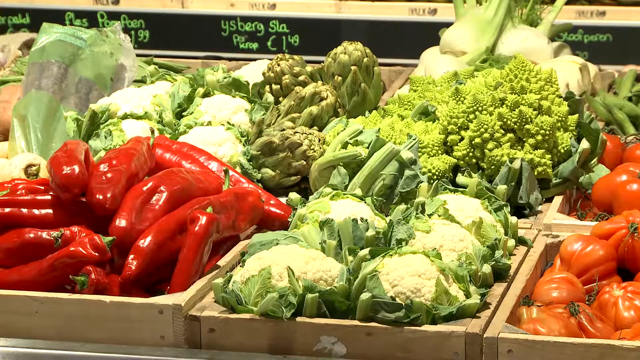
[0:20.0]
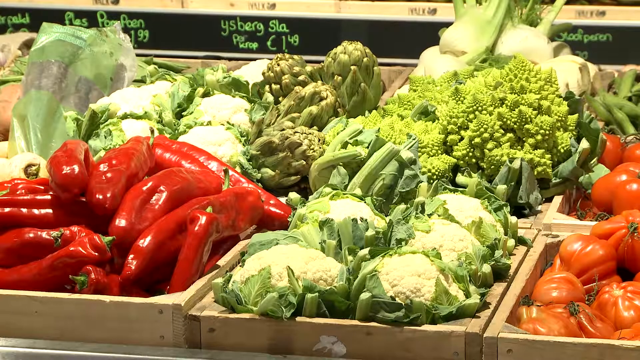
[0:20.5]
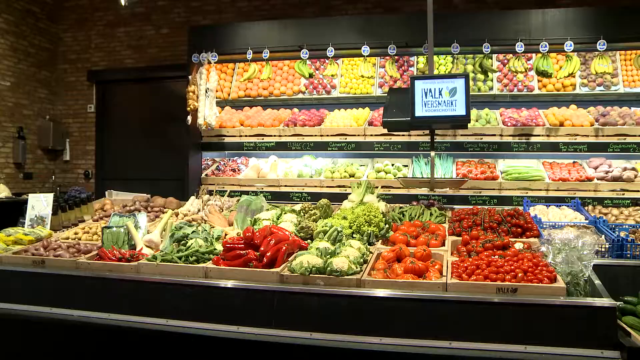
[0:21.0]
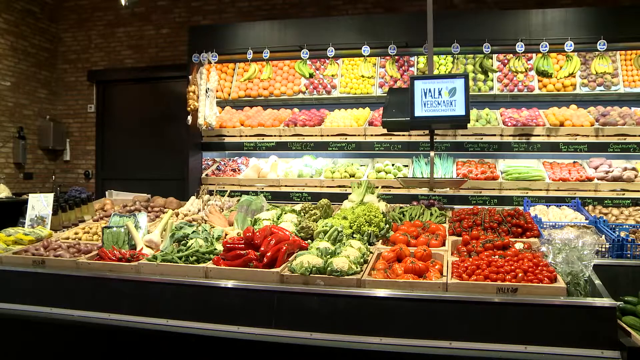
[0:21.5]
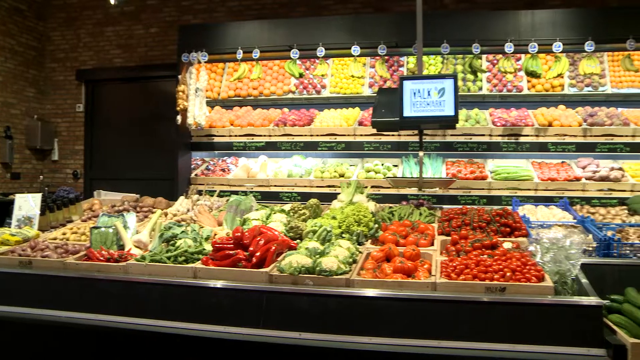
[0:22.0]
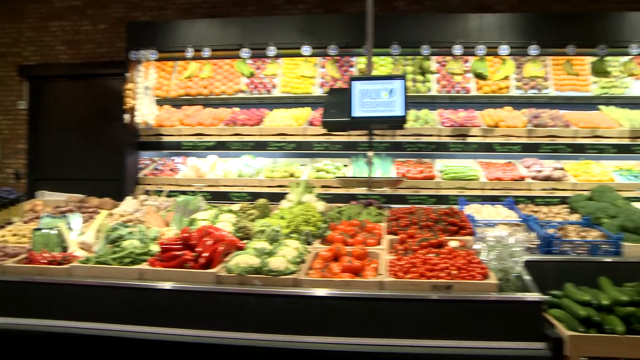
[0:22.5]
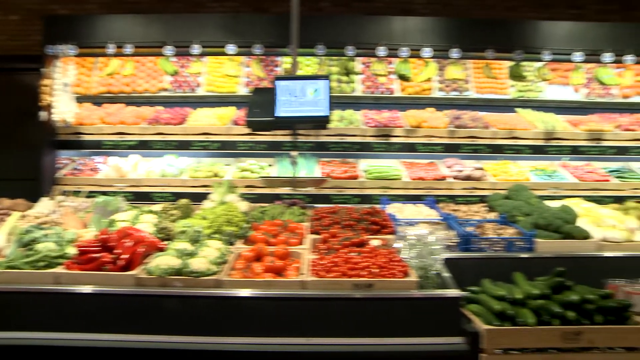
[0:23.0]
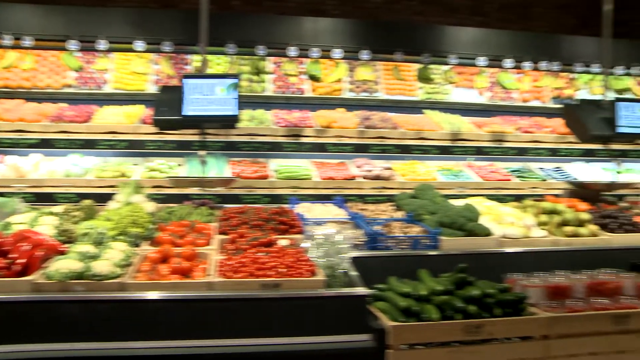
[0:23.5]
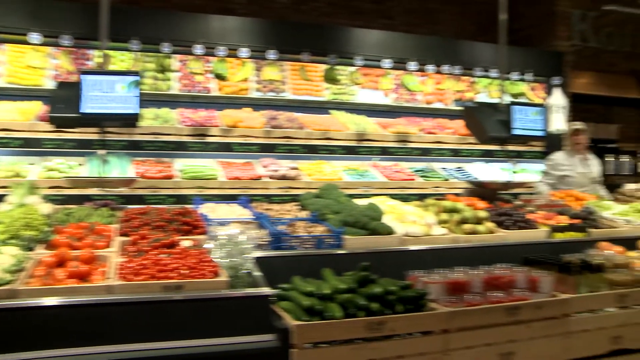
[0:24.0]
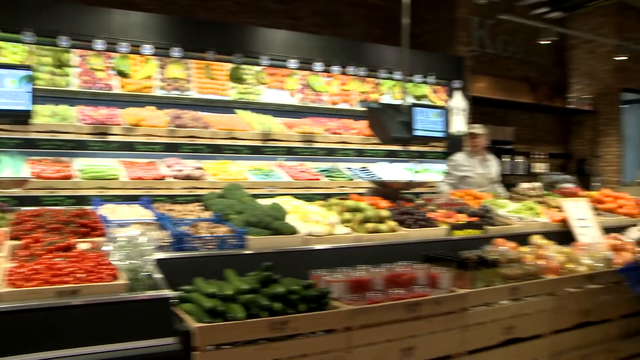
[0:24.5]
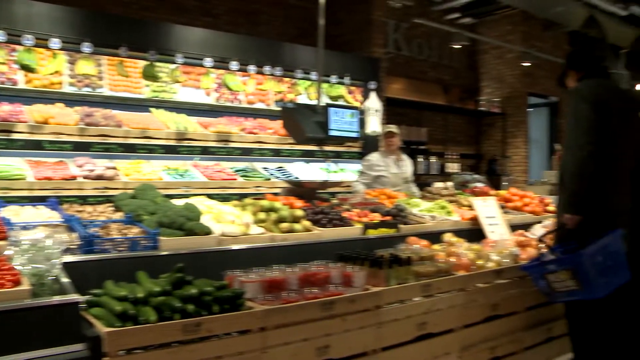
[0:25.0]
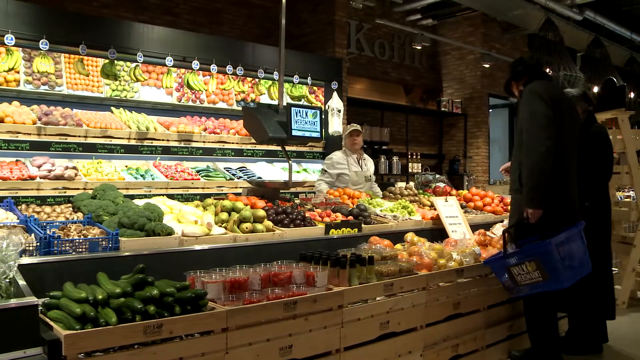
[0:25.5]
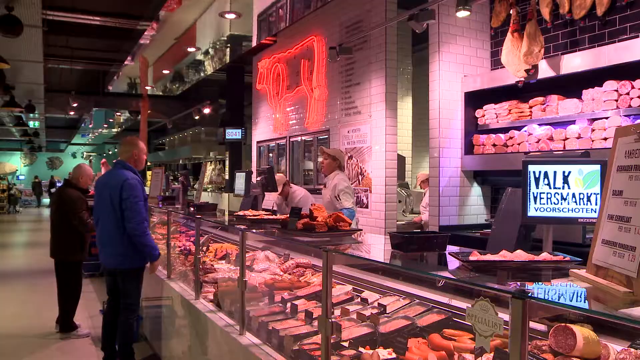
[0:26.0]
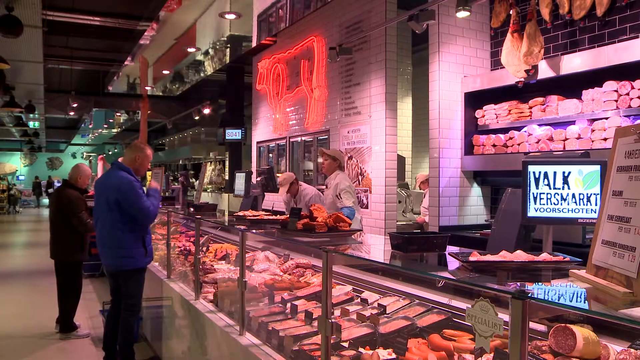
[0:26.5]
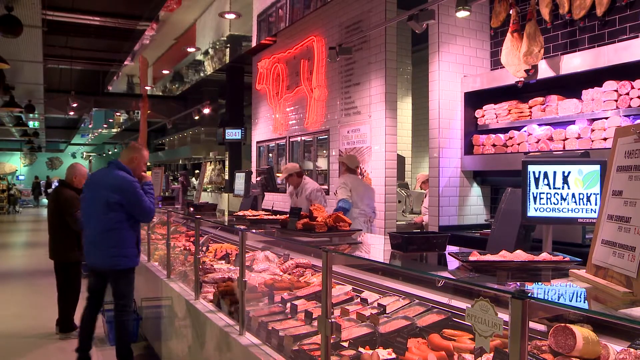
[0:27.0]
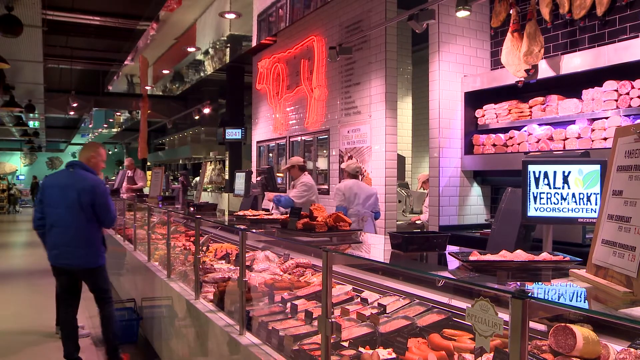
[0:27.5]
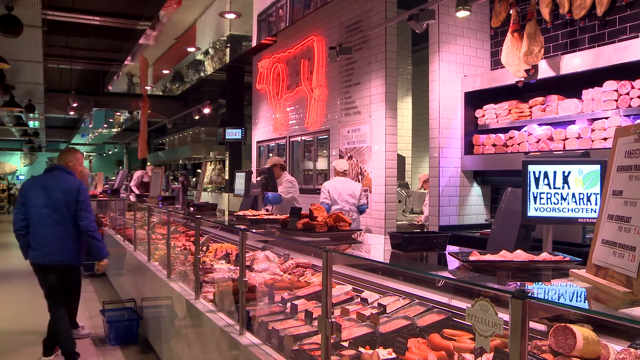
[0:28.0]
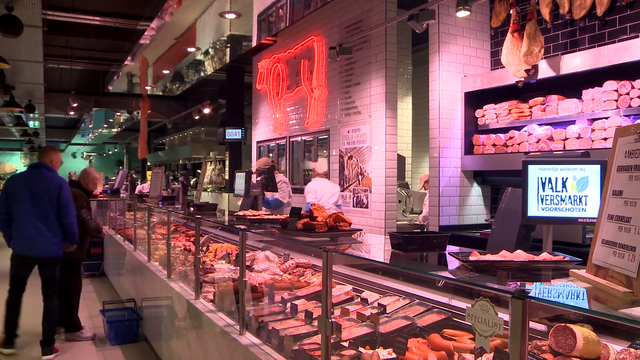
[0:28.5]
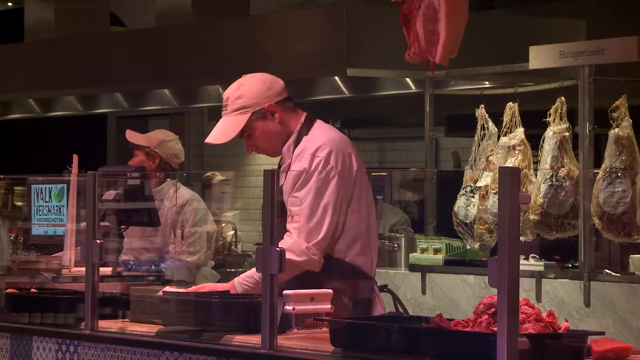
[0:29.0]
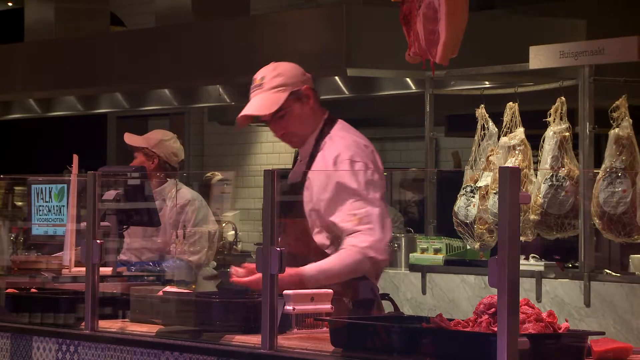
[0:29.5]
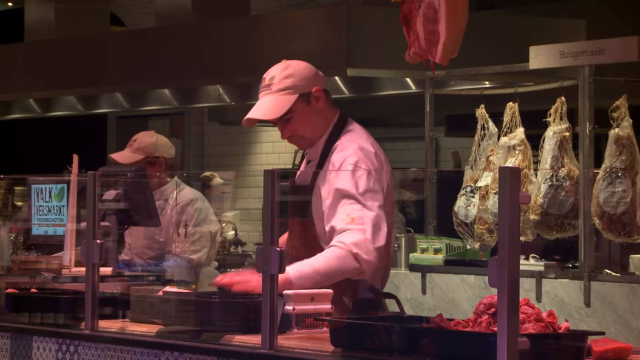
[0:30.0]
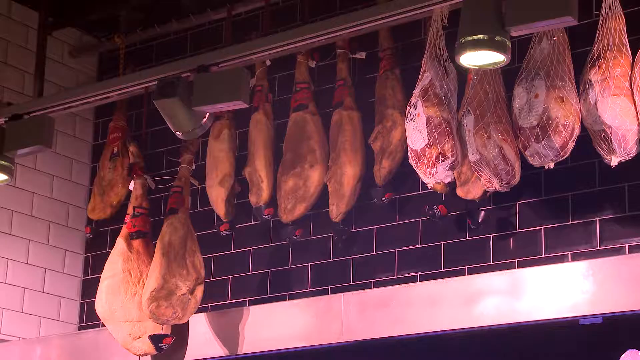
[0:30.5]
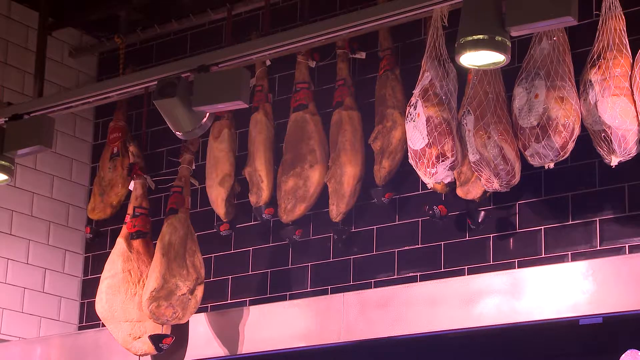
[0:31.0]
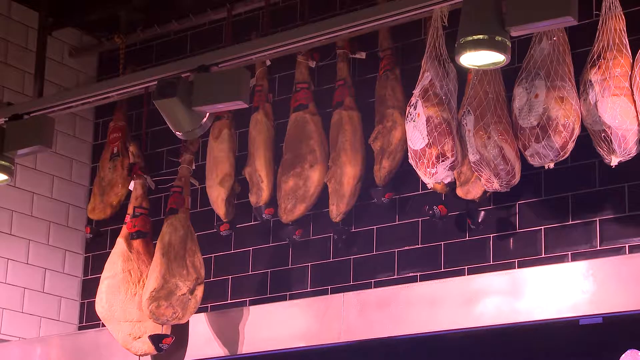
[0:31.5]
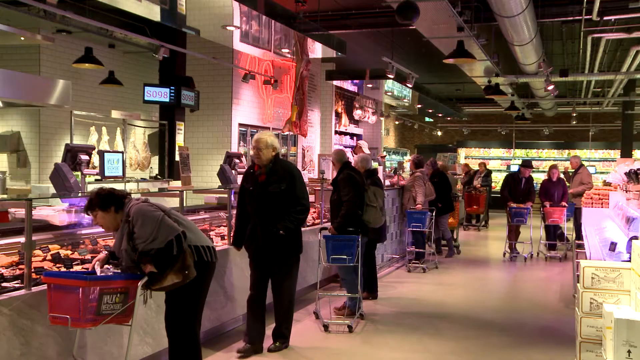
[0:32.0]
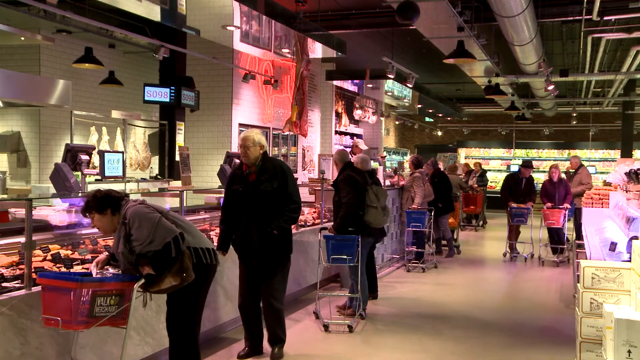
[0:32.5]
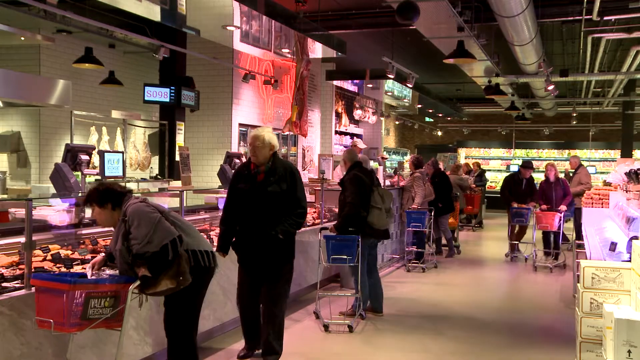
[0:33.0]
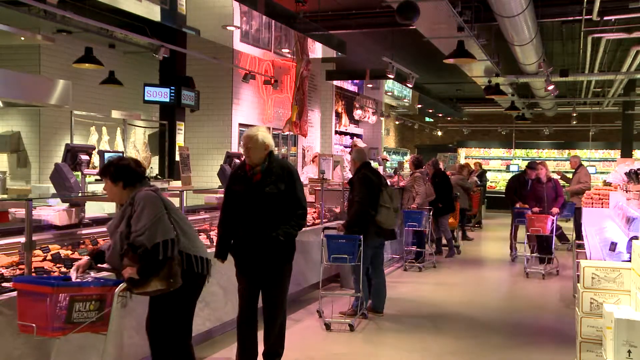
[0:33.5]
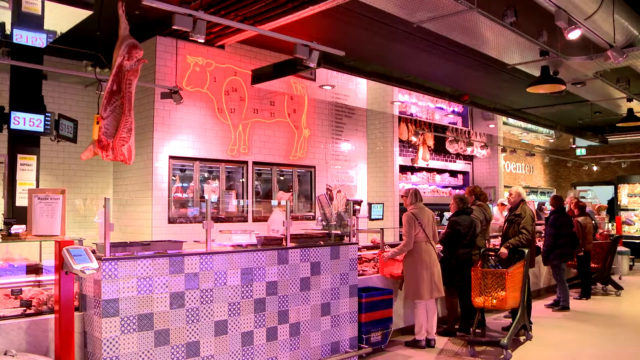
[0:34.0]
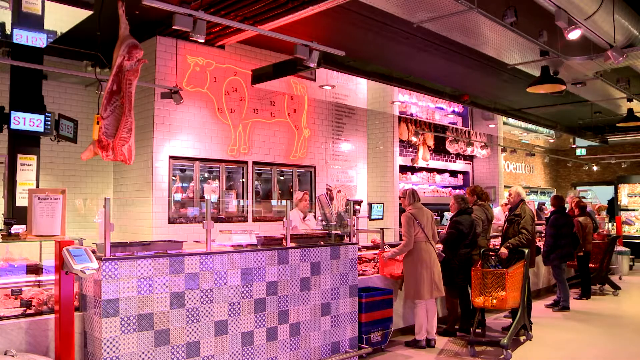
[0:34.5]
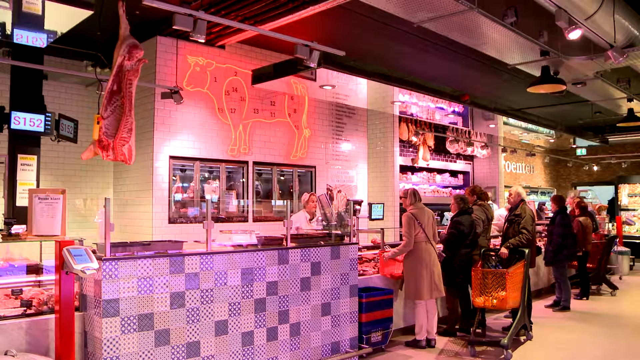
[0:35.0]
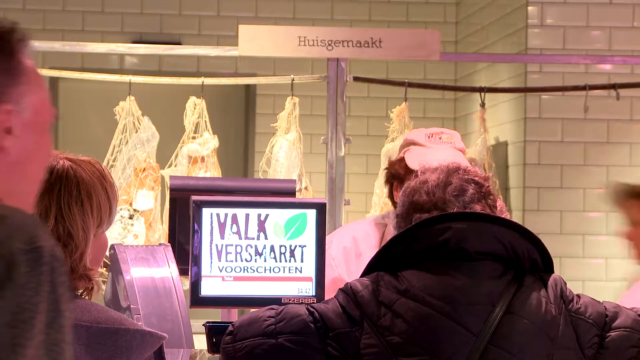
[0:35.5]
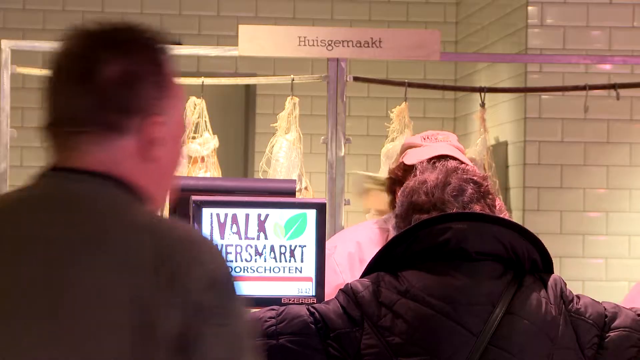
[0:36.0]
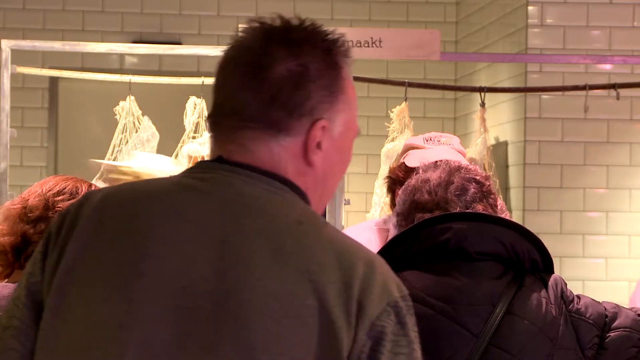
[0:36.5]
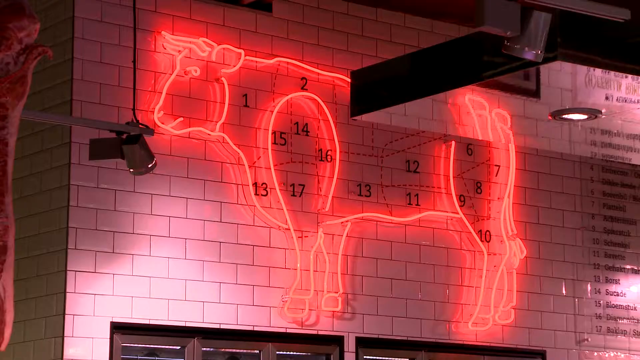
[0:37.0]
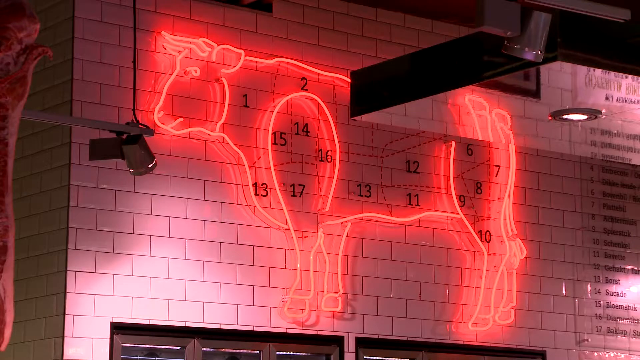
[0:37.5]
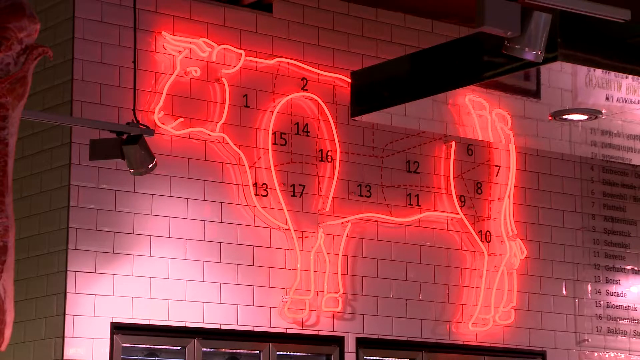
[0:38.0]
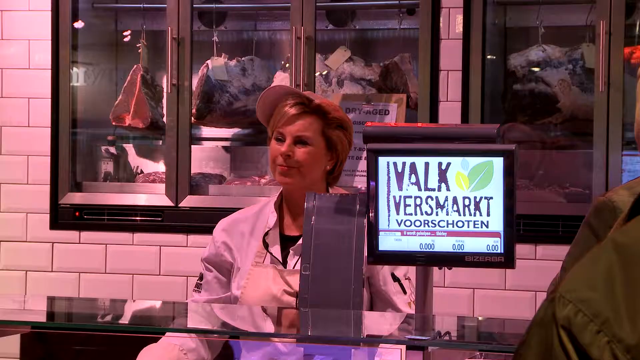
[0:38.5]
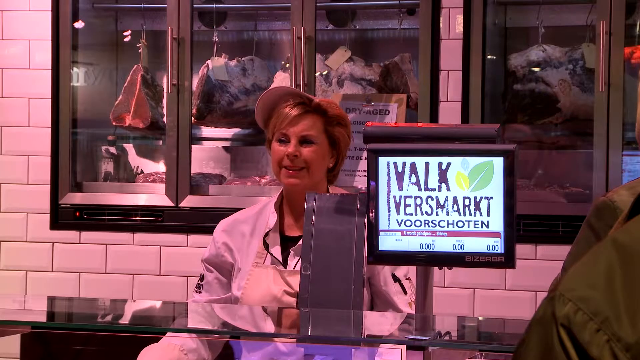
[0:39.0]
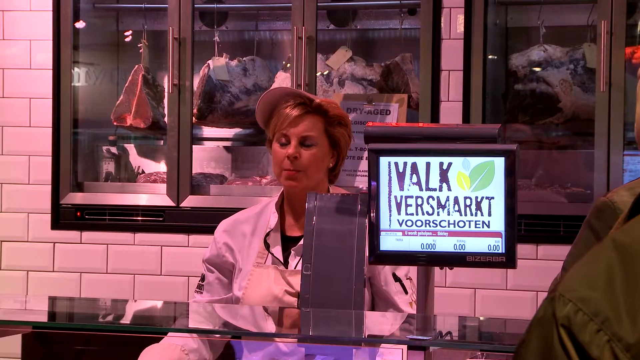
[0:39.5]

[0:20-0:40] The view shows the grocery area of the store. A center area holds fresh vegetables in different bright colors in rustic baskets: tomatoes, what look like peppers, some fennel, broccoli and lots of different mushrooms. Against the wall are more rows and rows of vegetables, with a mirror above them reflecting them and a tablet above that. The camera gives a kind of 360 view of the market. There apparently is also a butcher, and people walk through what looks like a sort of food court. The space is very industrial looking, with exposed pipes at the top of the ceiling, and pretty modern. People walk around with small shopping carts; some are elderly, and they all wear coats. The areas look like different sections of a restaurant. Finally, a cashier speaks to a customer, and the video stops.